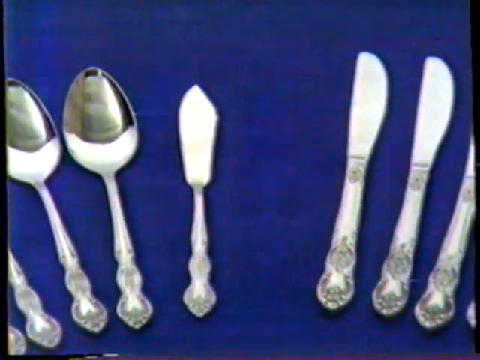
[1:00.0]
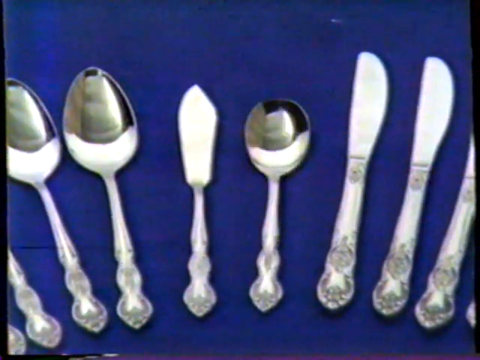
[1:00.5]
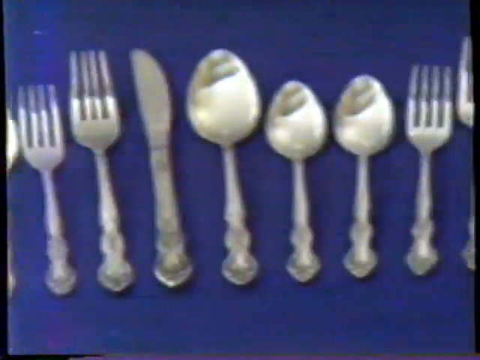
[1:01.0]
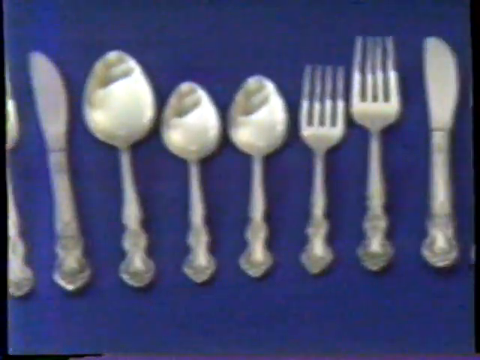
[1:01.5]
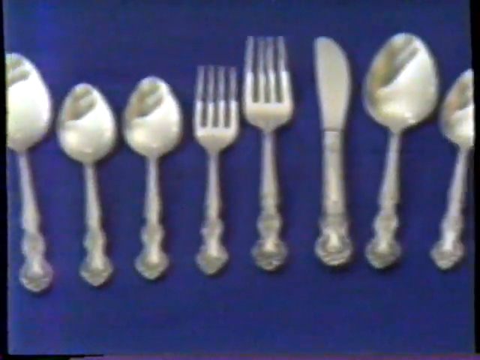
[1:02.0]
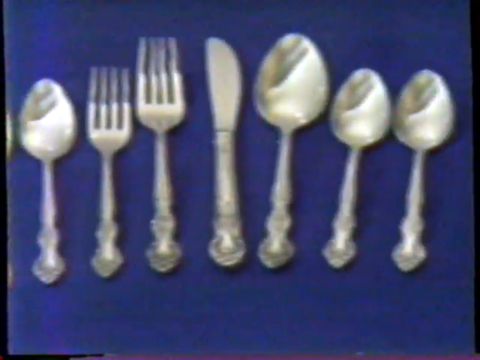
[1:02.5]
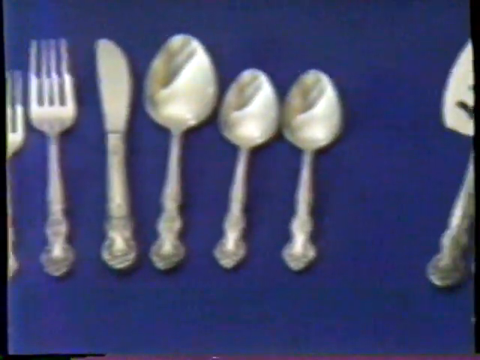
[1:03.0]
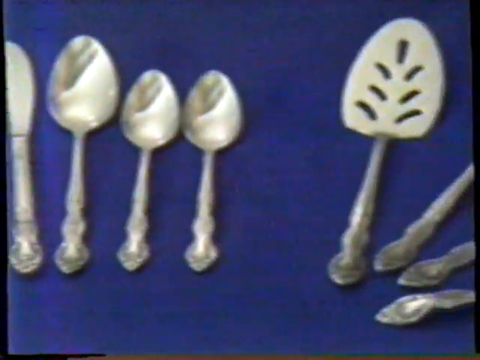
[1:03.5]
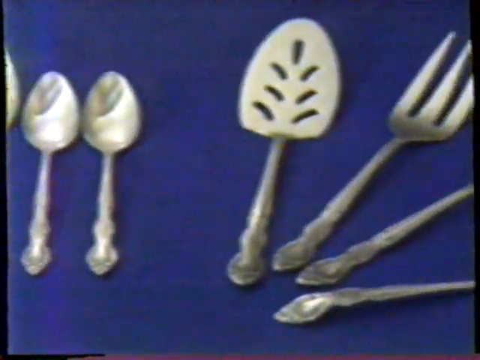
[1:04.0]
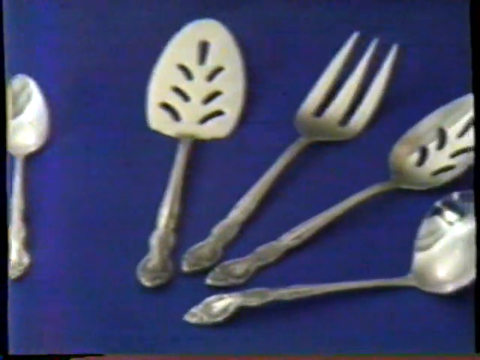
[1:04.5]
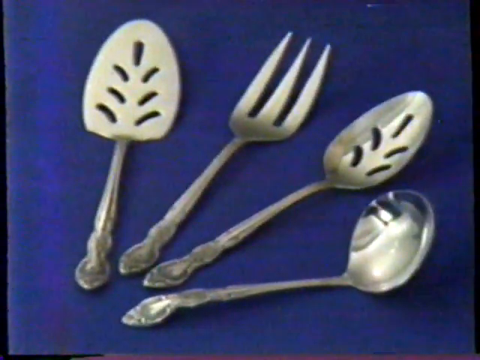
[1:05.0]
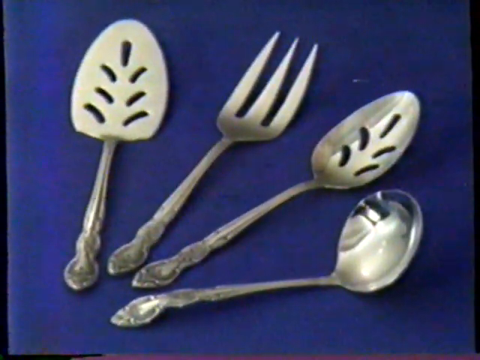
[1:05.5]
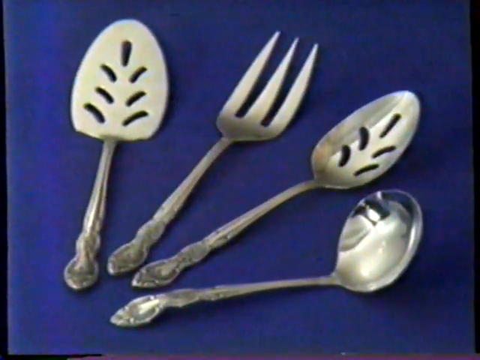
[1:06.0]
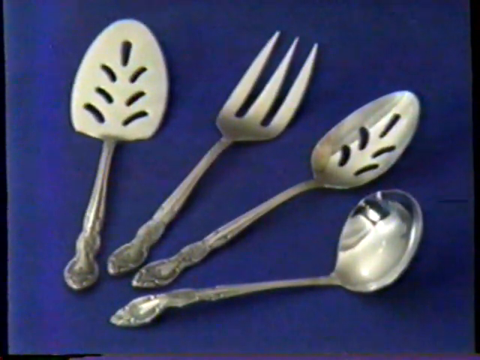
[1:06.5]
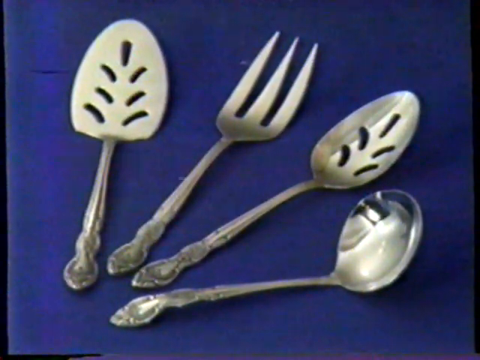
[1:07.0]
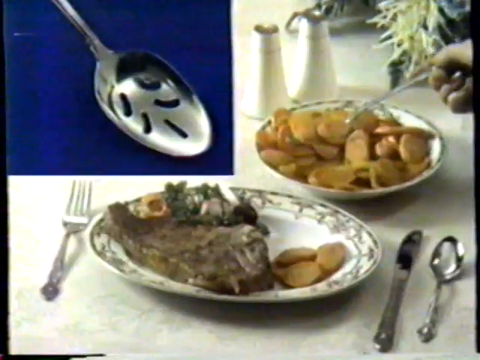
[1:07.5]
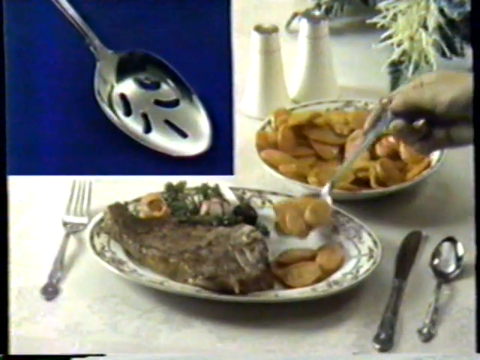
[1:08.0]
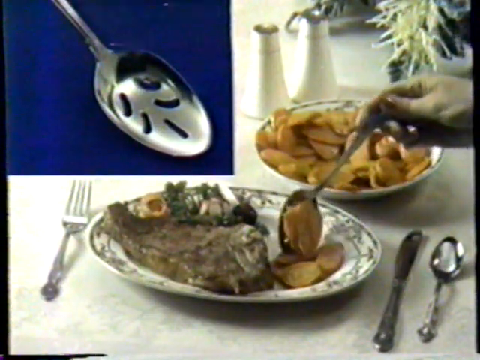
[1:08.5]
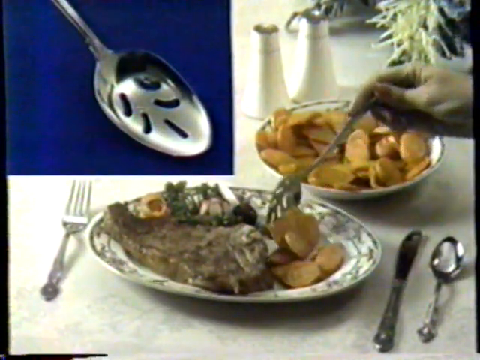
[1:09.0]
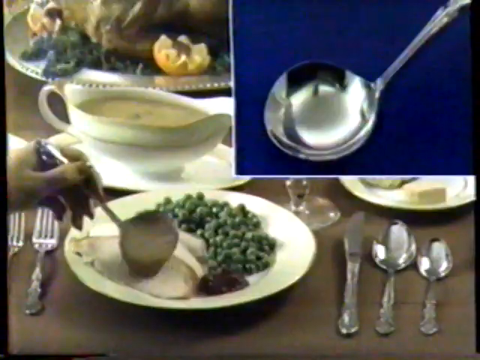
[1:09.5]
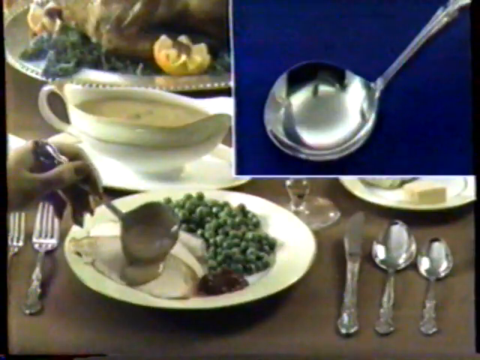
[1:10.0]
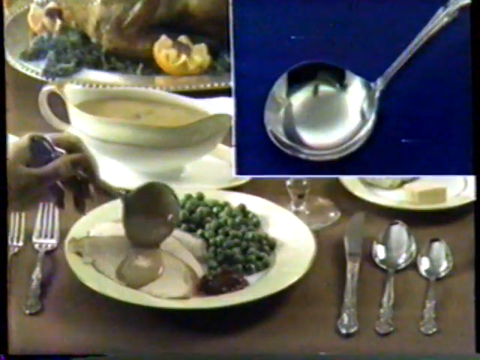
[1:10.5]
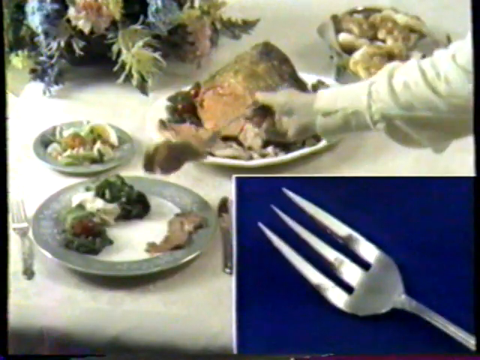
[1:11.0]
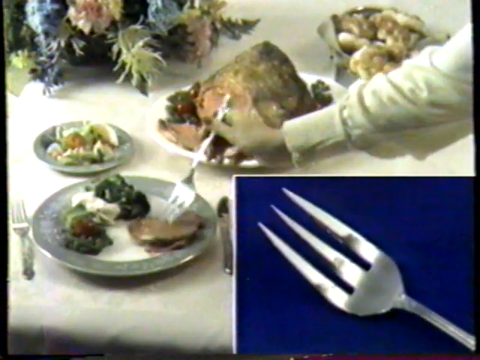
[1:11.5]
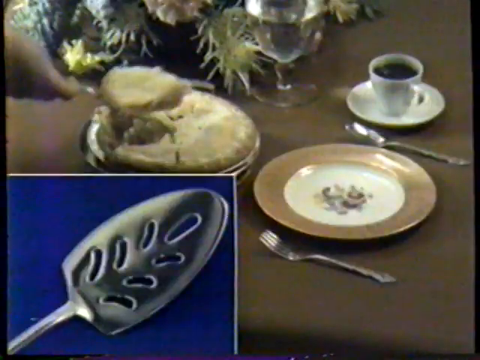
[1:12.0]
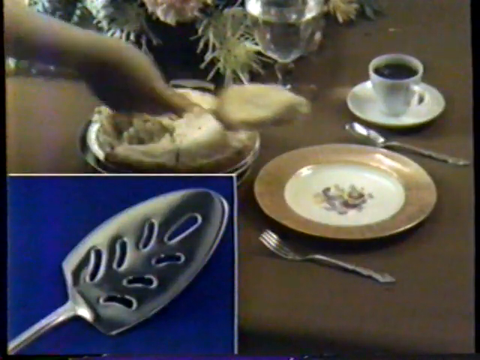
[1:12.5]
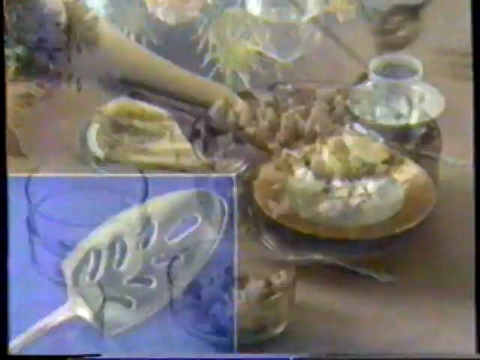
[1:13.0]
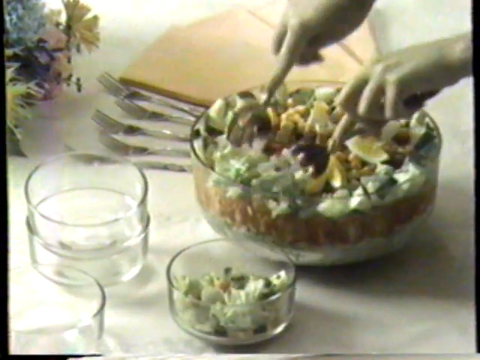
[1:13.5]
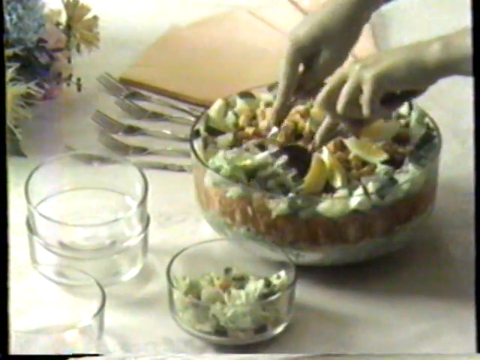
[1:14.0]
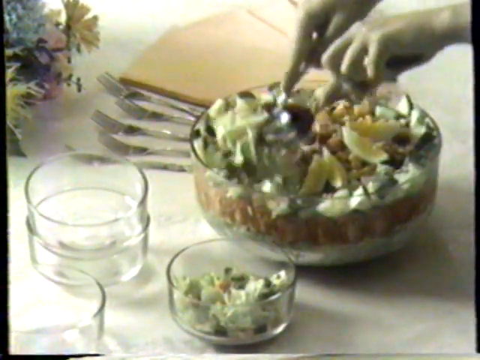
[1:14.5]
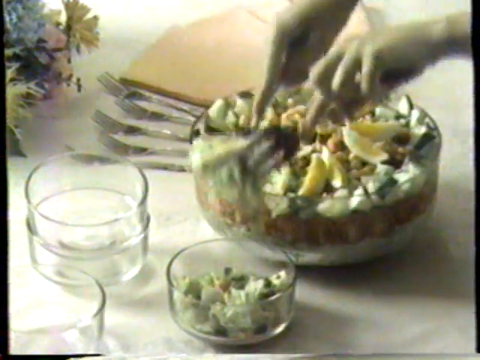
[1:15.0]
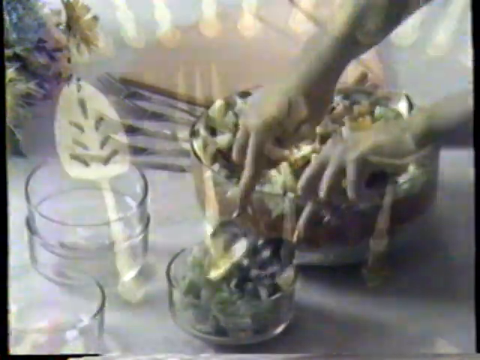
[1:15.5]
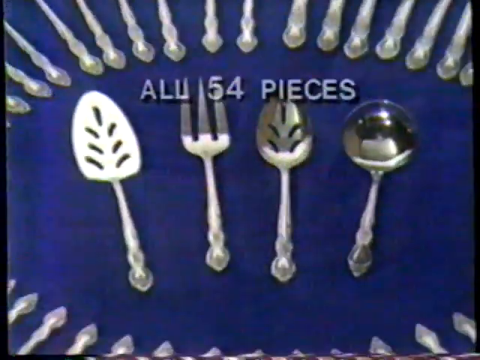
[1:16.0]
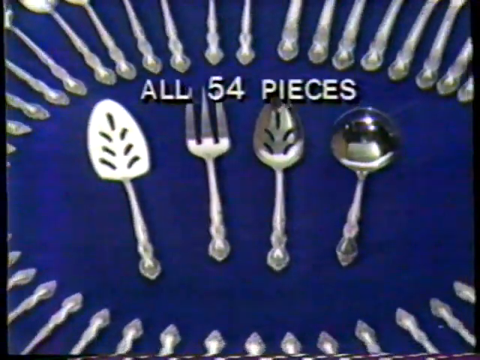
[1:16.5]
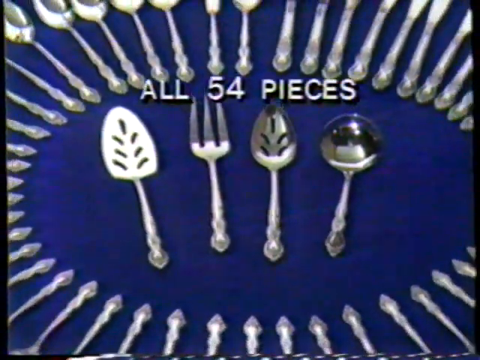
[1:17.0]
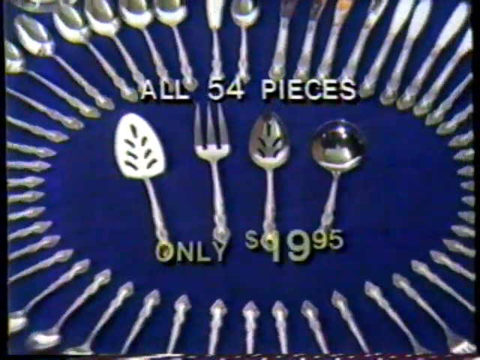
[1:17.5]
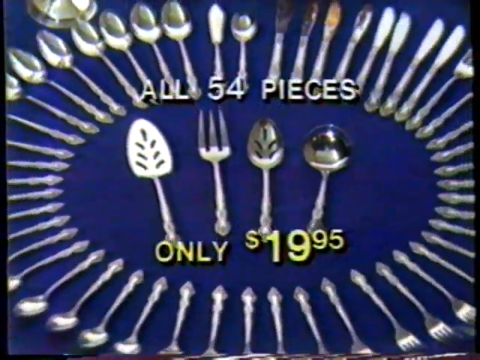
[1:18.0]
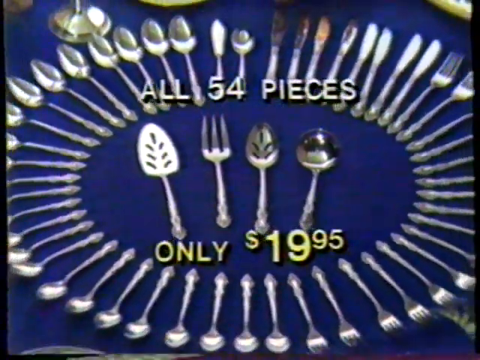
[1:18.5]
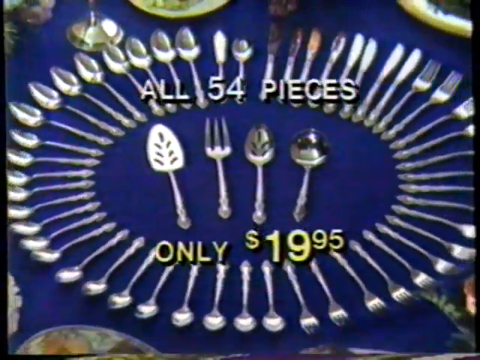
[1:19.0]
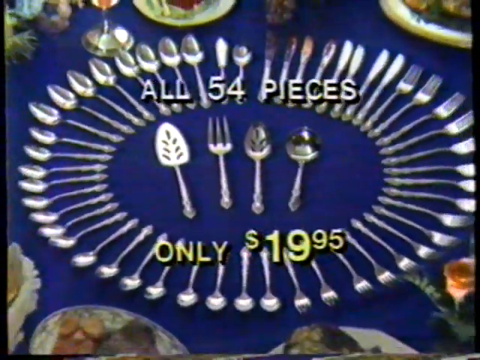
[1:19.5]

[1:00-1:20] A small cheese fork, a tiny metal spatula with several holes in it, a slotted soup spoon and a ladle are shown as the camera moves toward them. A blue panel with the spoon is in the top left of a scene where a lady places food from one plate to another, showing that it does not transfer juices and liquids; this is done with roasts and steaks. The little spatula moves a bit of quiche over to a plate, and a salad fork transfers salad from a bowl to a plate. The full set, including these four new pieces, is then shown on the same black-blue tablecloth from earlier, and the text "All 54 pieces, only 19.95" appears at the front of the screen in front of the stainless steel cutlery.